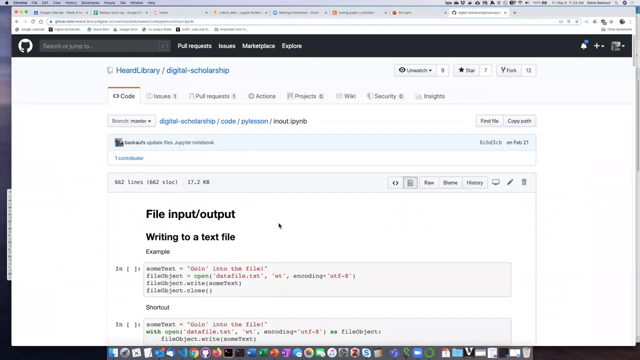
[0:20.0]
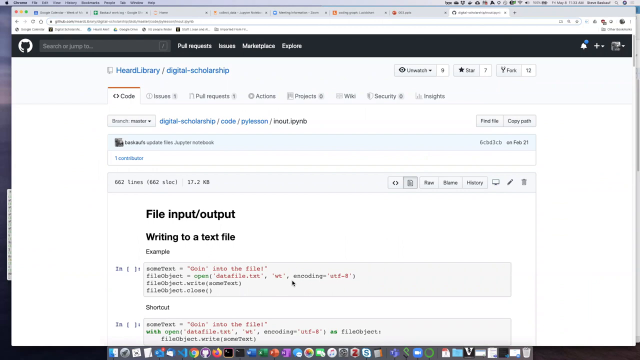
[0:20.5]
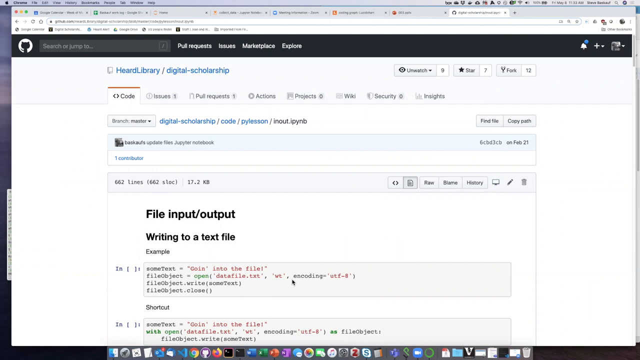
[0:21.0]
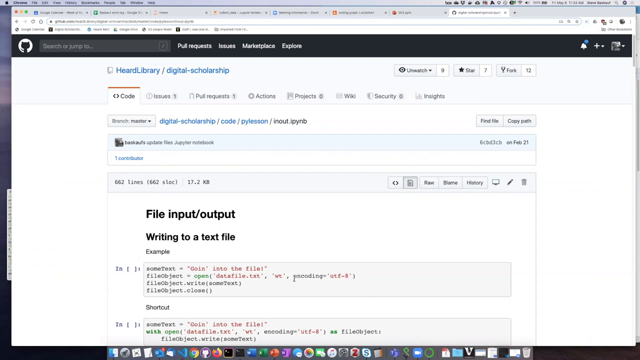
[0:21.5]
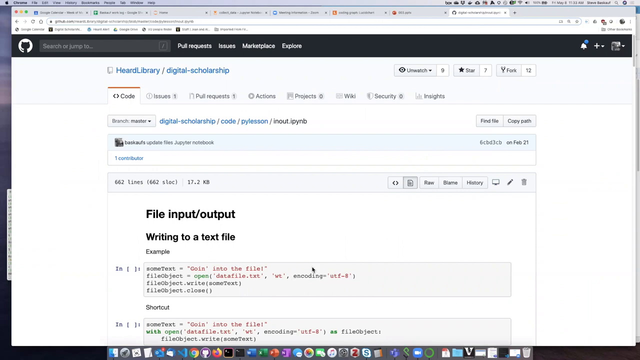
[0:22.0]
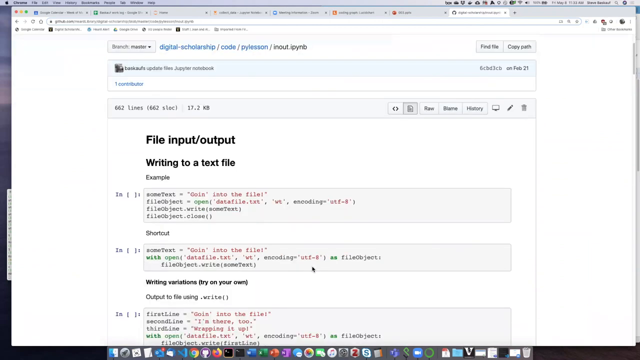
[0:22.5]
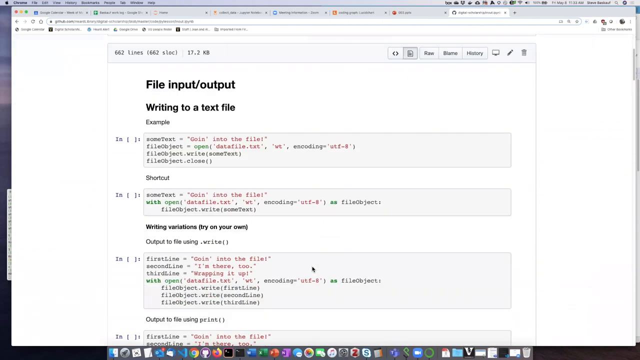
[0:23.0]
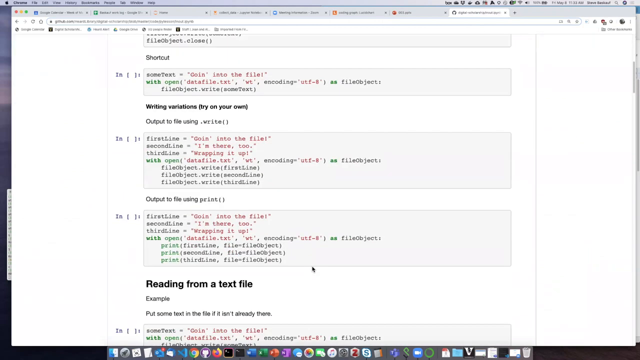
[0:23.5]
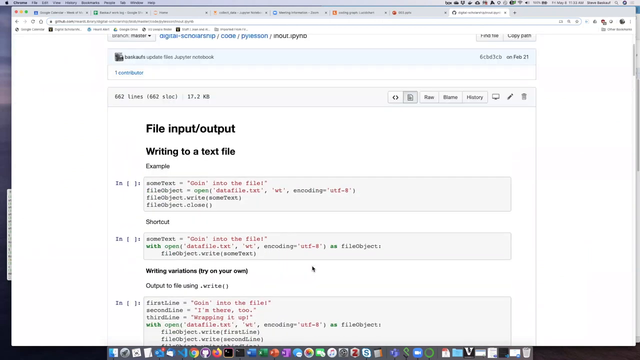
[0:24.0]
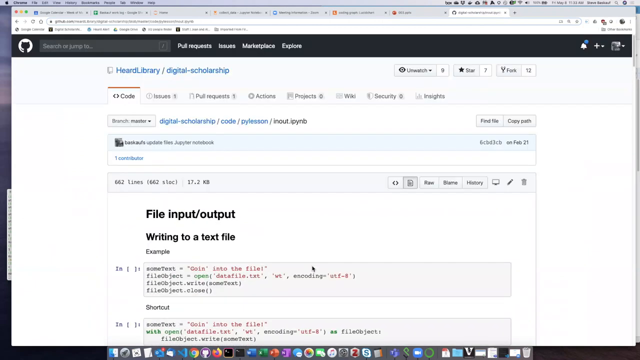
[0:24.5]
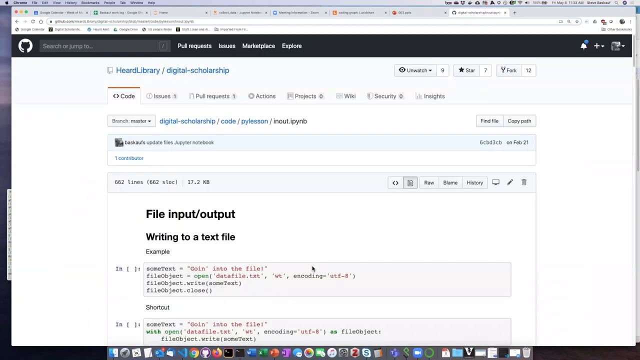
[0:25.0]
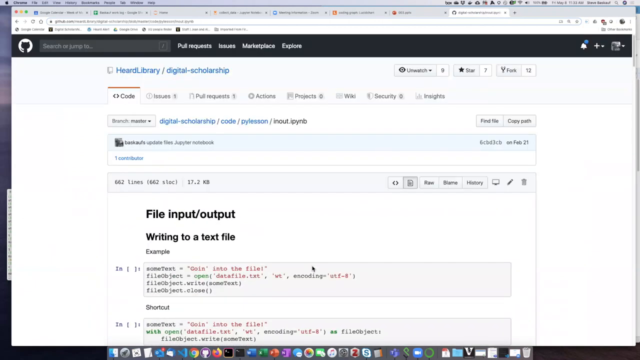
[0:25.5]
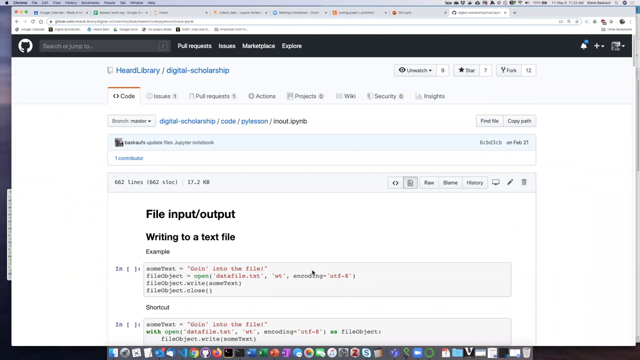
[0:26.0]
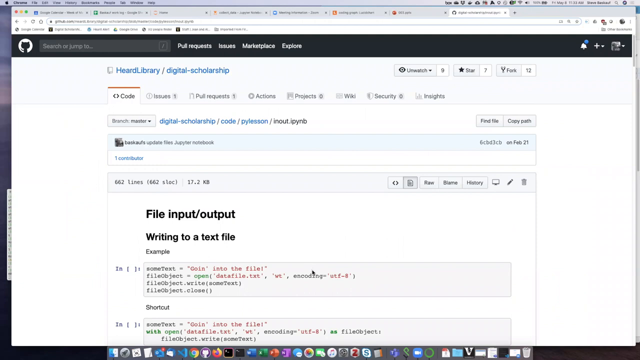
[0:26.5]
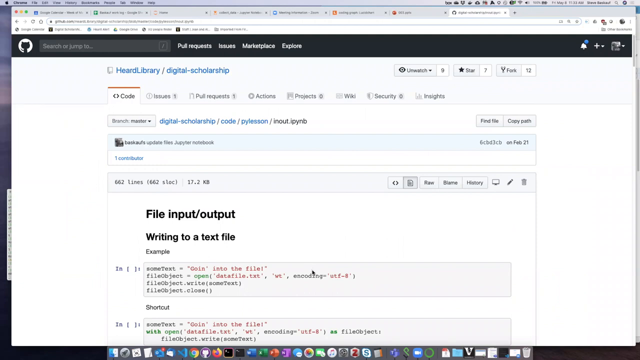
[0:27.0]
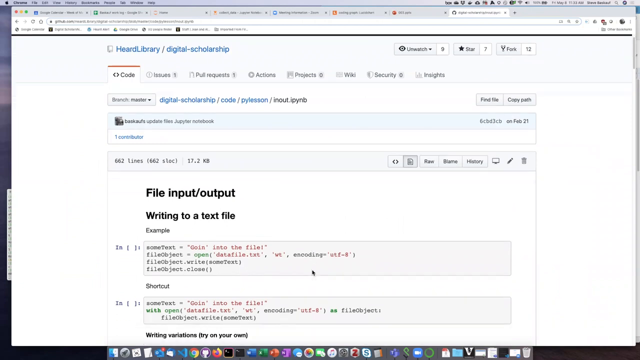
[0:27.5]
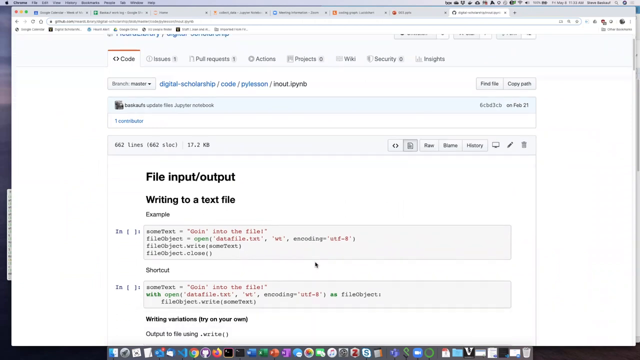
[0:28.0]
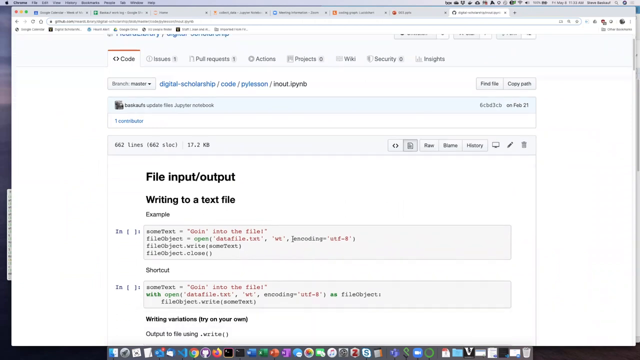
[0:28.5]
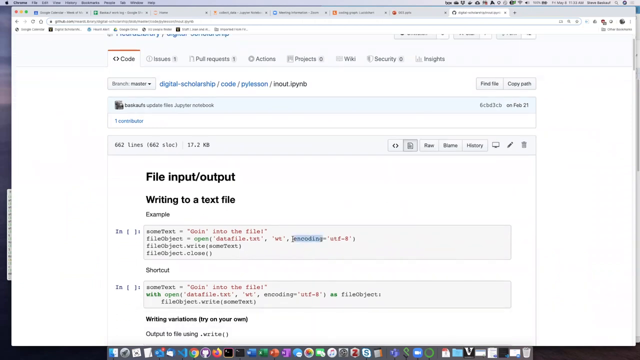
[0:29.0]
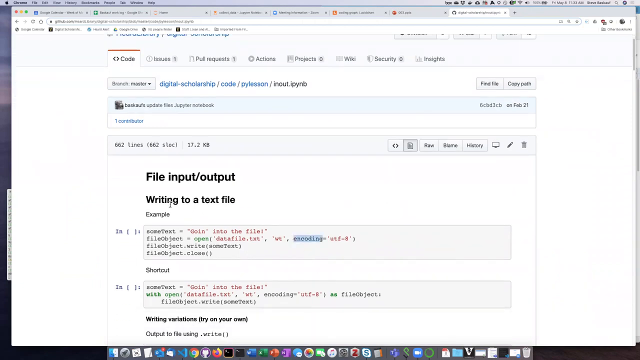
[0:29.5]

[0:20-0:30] The same "file input-output" page shows web code in different boxes, with four boxes visible. The page scrolls down, and the boxes are filled with green and red writing. The cursor scrolls back up and hovers over where it says "file input output," moving back and forth over it. Most of the writing on the page is very small and hard to read; the legible text includes "code," "digital scholarship," "writing to a text file example," "find file," and "copy path."